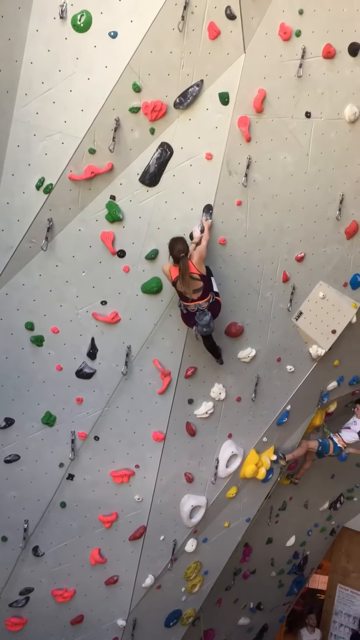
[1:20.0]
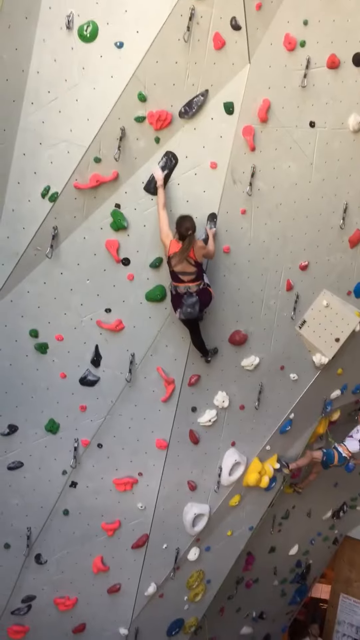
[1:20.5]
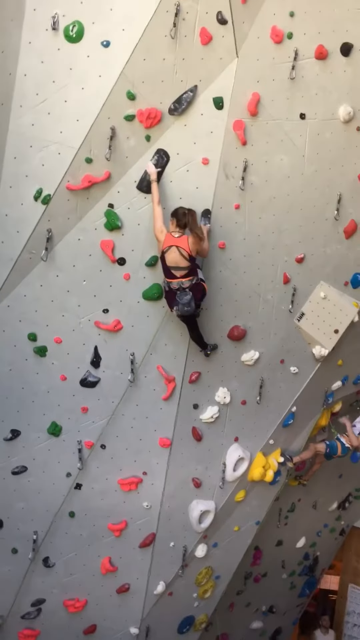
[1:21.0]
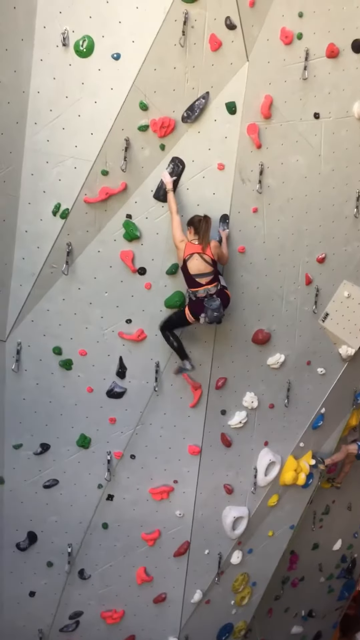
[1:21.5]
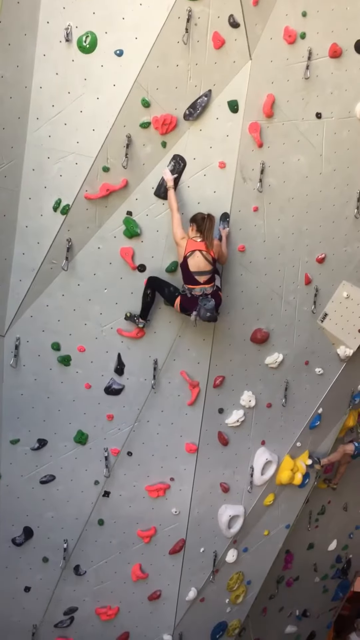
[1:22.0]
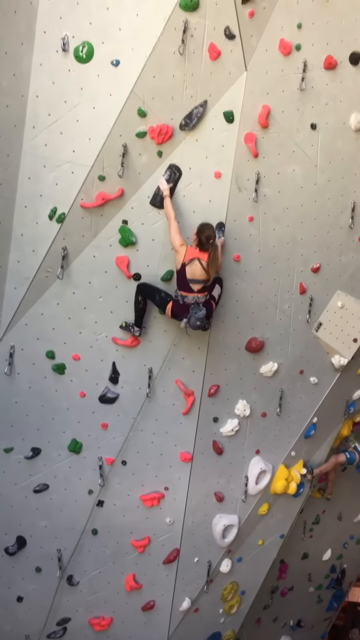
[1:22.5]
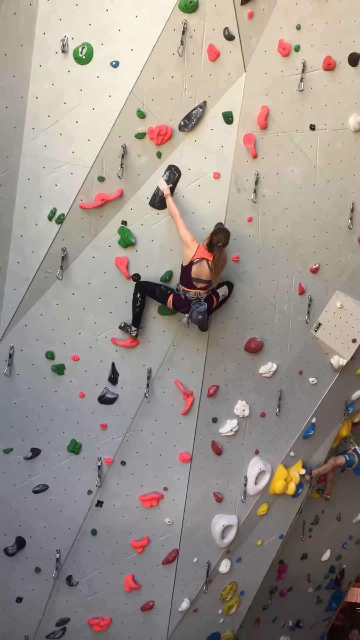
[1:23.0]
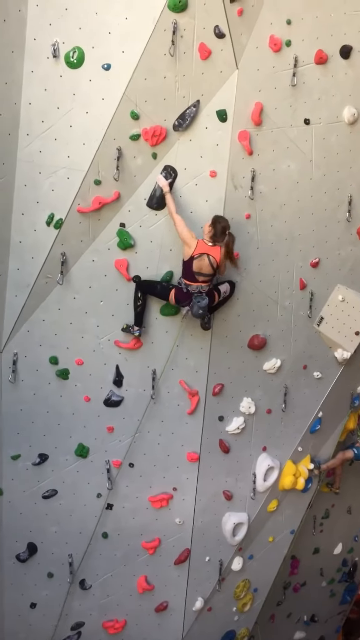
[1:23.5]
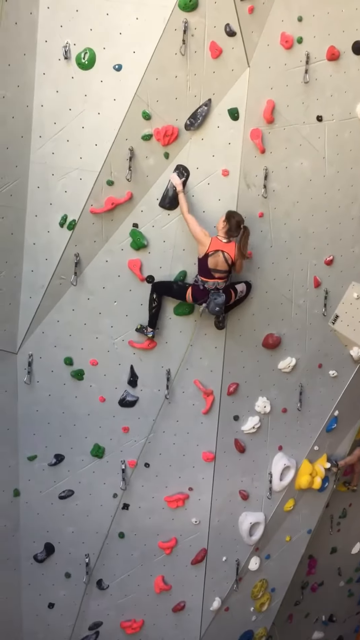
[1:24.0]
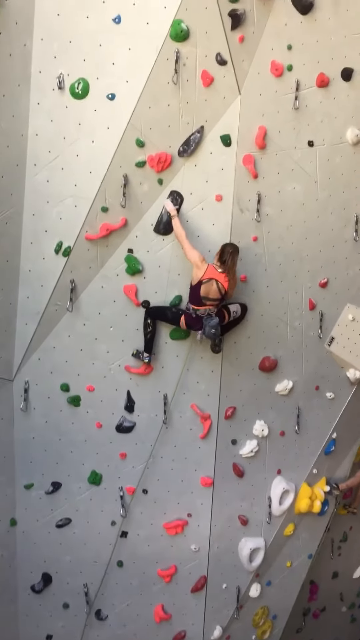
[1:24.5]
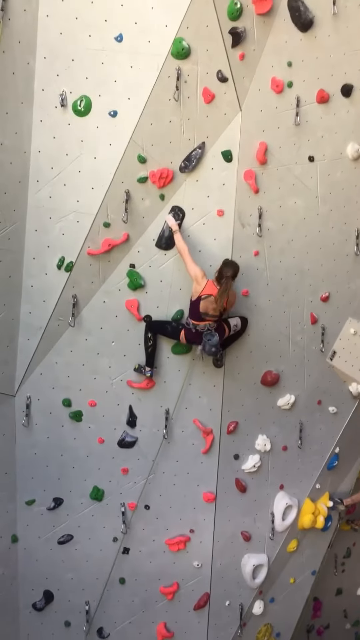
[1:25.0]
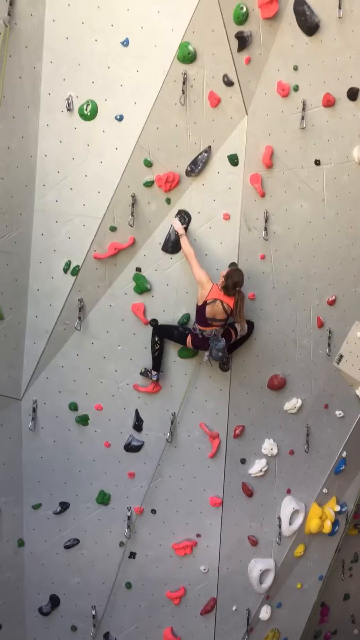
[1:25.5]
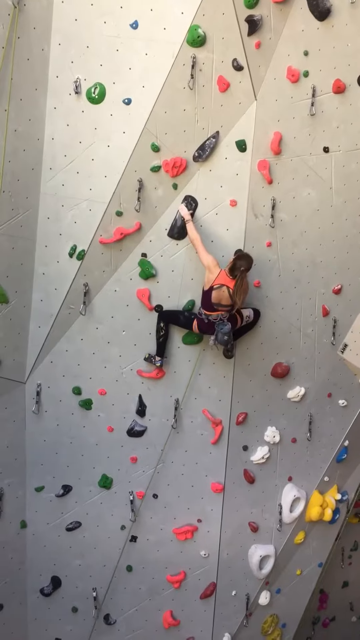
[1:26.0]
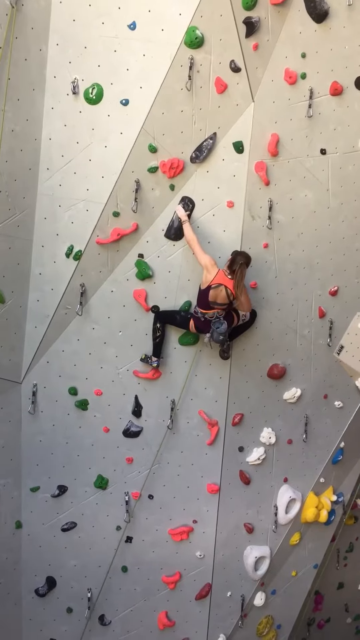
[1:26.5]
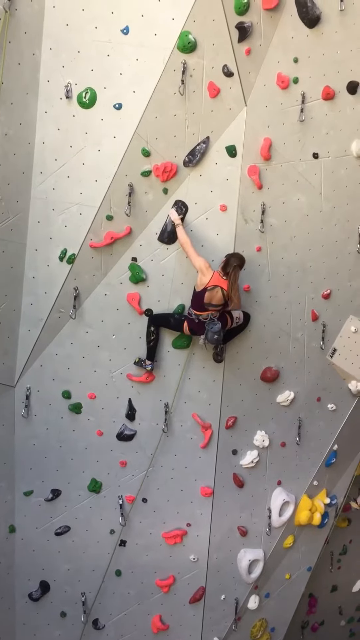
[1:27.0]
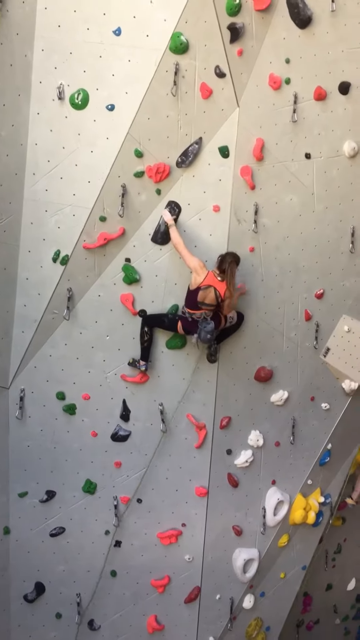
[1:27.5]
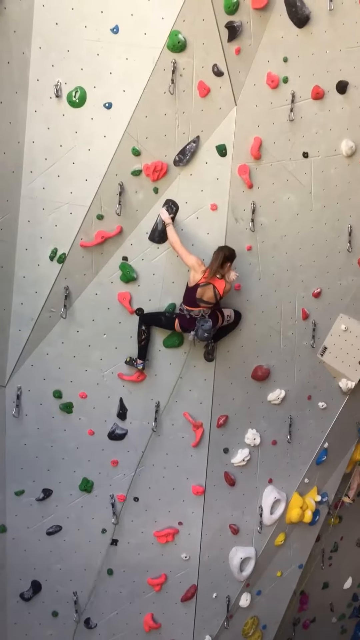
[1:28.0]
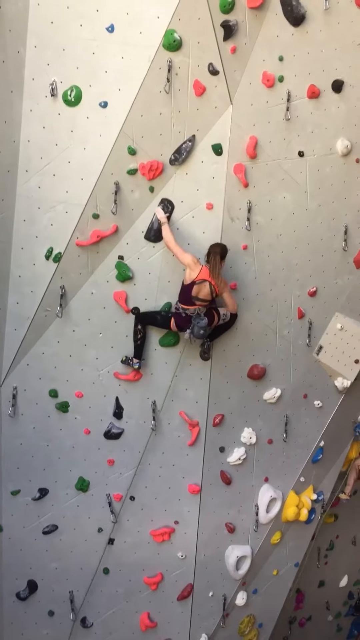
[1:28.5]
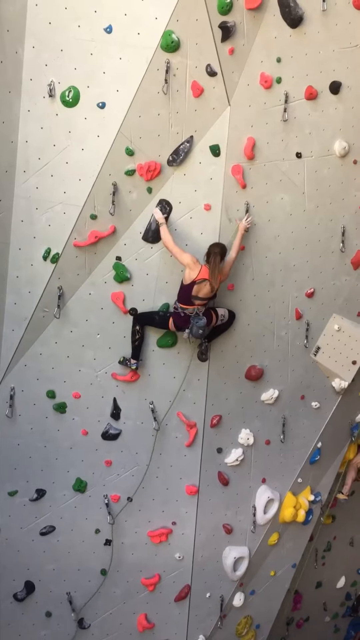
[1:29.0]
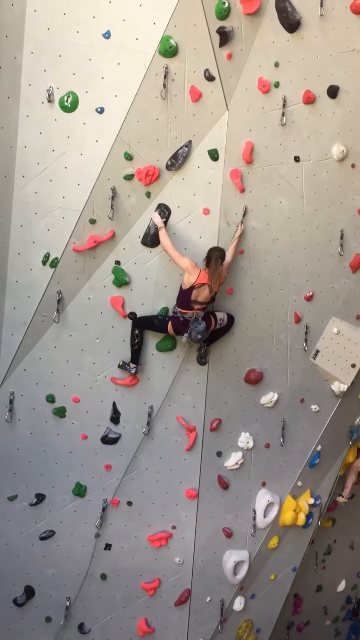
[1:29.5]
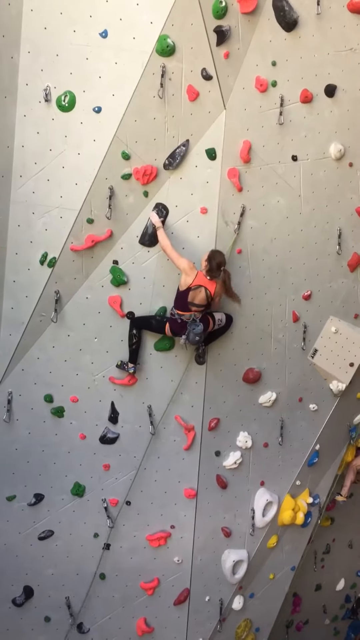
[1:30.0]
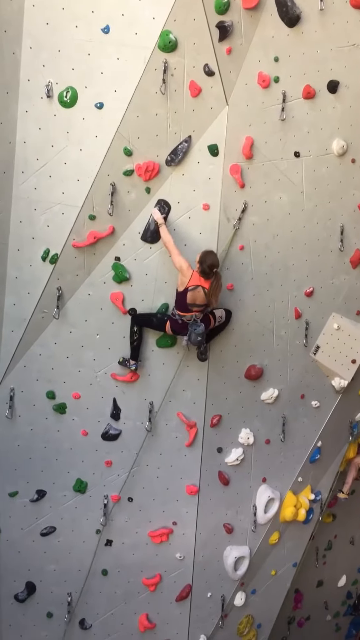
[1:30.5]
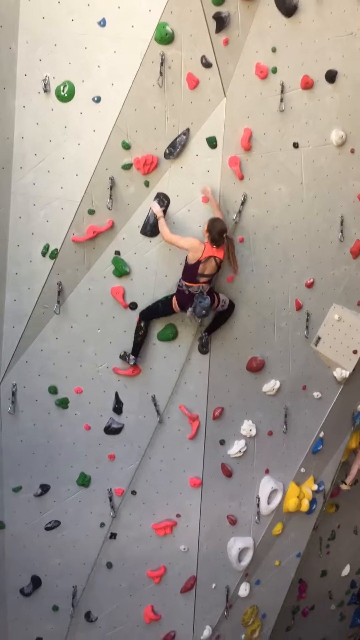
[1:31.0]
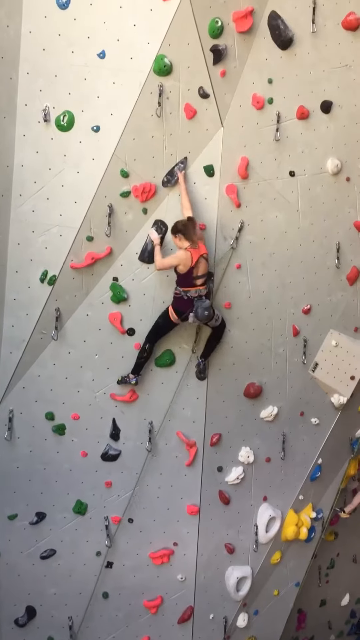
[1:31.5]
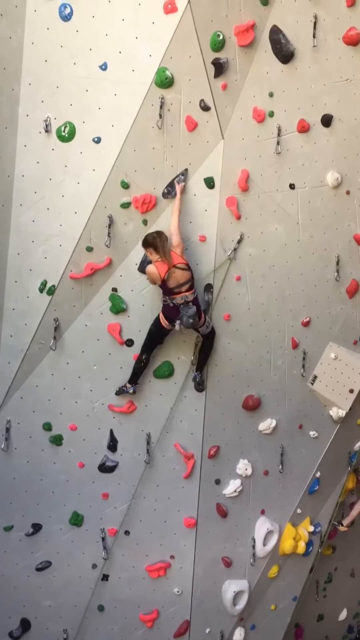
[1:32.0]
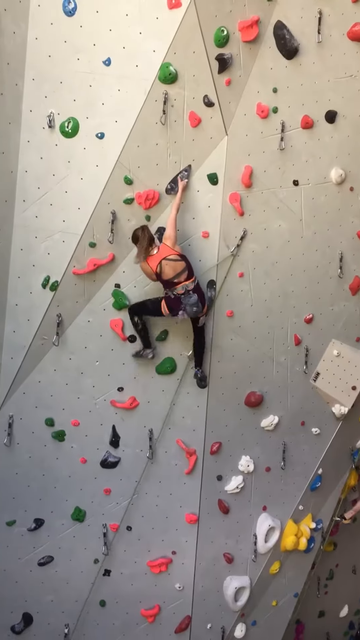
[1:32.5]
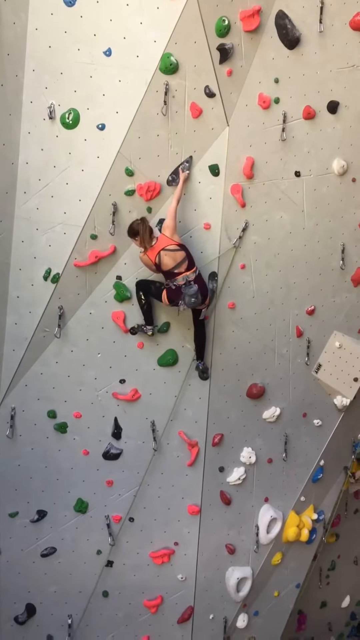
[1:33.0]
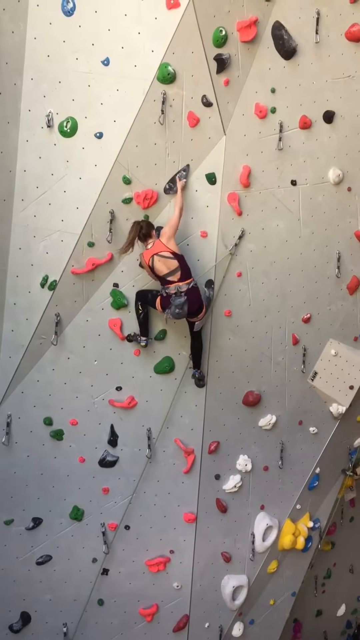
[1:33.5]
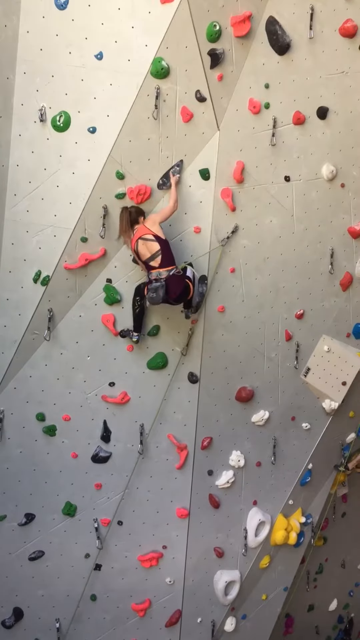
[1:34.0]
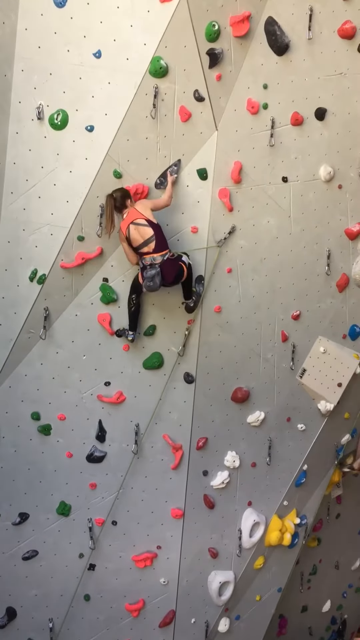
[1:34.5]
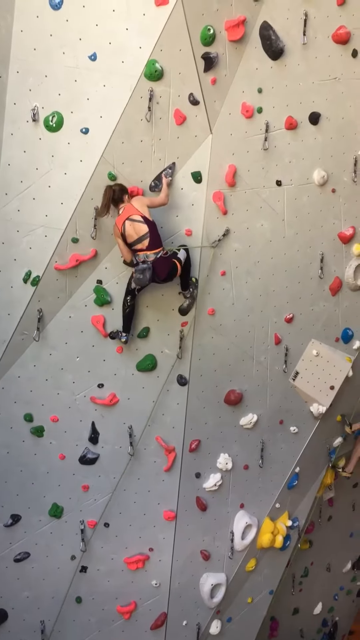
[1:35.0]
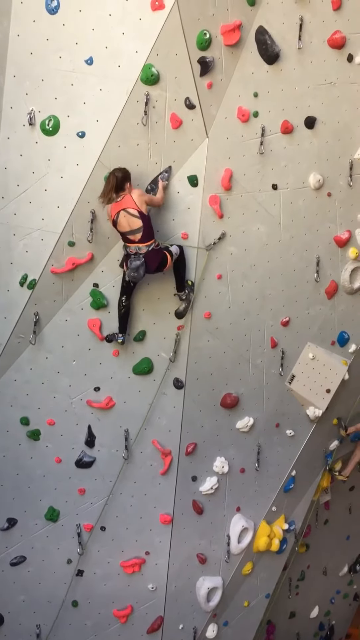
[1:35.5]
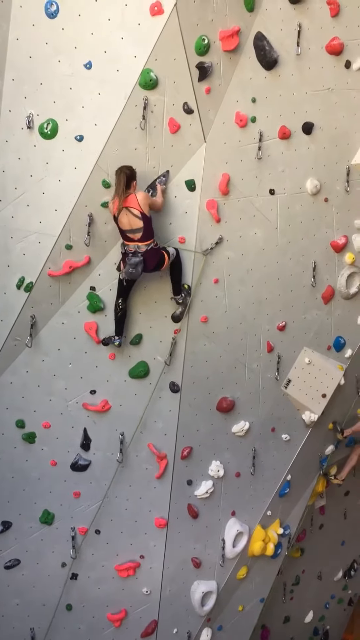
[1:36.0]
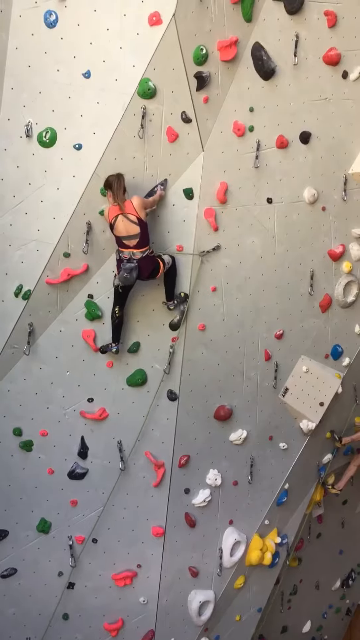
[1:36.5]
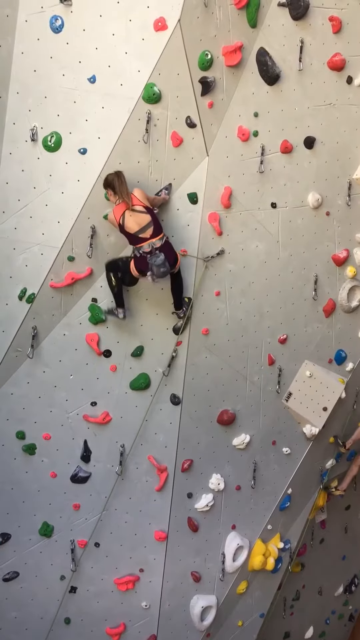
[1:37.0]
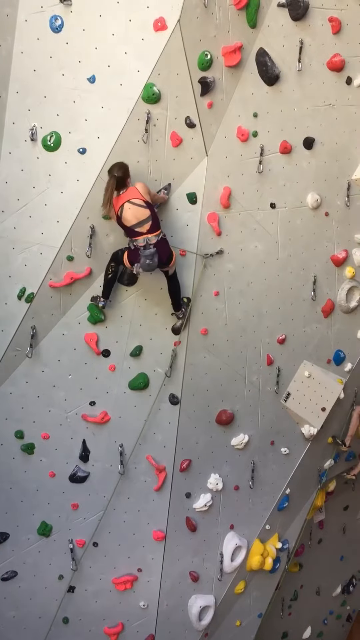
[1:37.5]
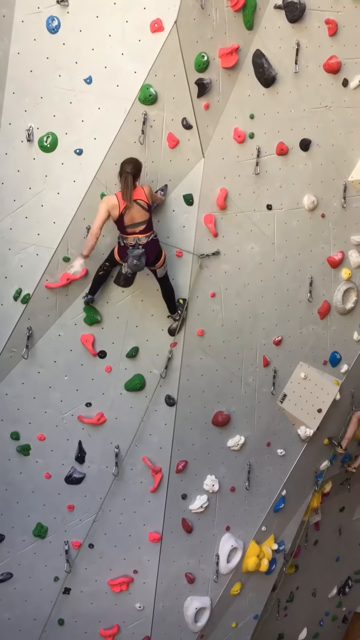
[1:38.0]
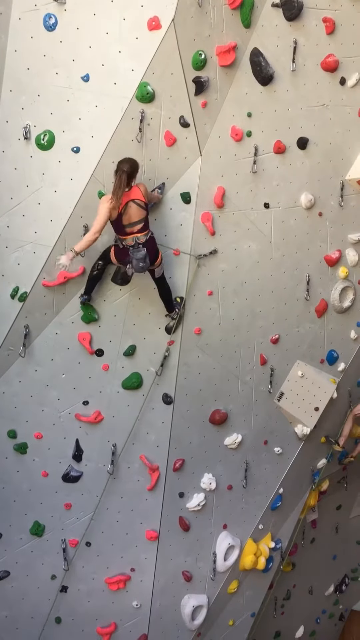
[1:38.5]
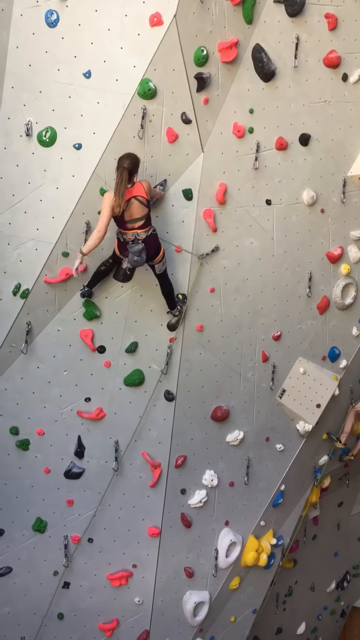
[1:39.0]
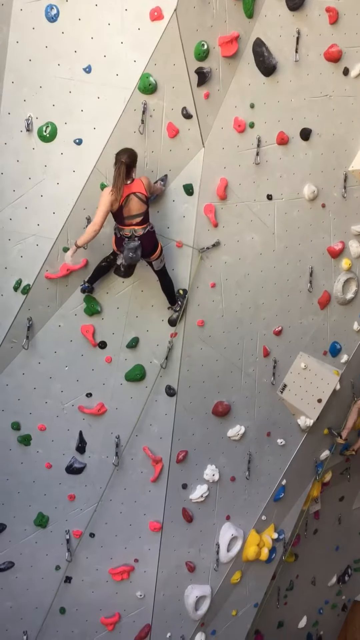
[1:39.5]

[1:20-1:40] A woman climbs a grey climbing wall covered in black, green, yellow, pink, white, blue, and red pieces that the climbers use. In the lower right of the wall, a man in a white shirt and blue shorts is trying to climb up. The woman is toward the center of the wall. She reaches out with her left arm to grab a black piece while her left leg lays against the wall for balance. She then brings her left leg up and bends it to place it on a pink piece and moves left; as she does, her right leg is bent at the knee and laying against the wall, and she steadies herself. She brings her right arm up to grab a chain, then reaches over herself with her right arm to grab a black piece and pulls herself up, her feet on another black piece and a pink and green piece. She shakes her left arm and then reaches behind herself to the bag on her back.